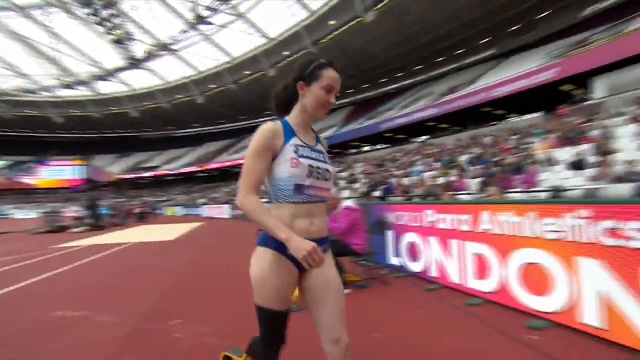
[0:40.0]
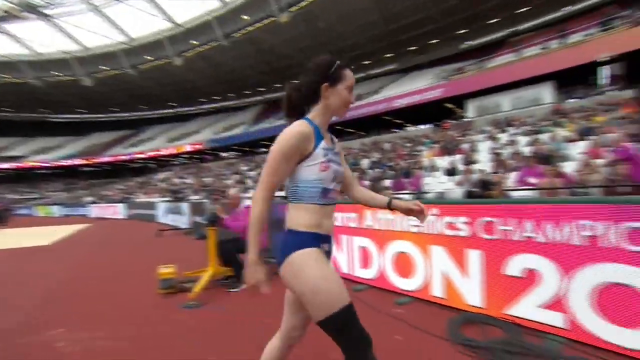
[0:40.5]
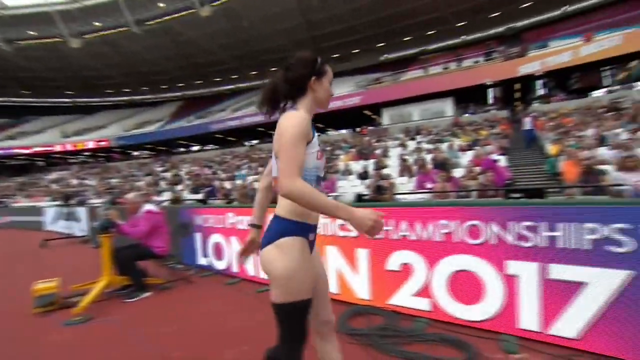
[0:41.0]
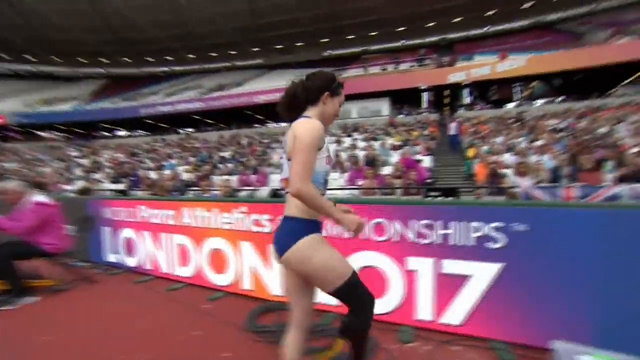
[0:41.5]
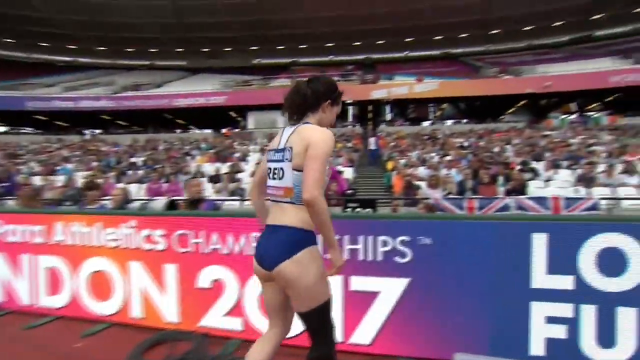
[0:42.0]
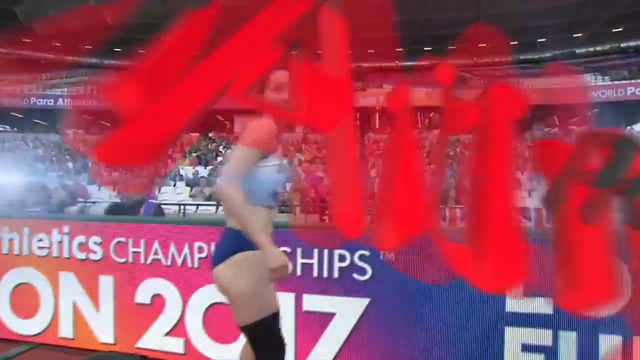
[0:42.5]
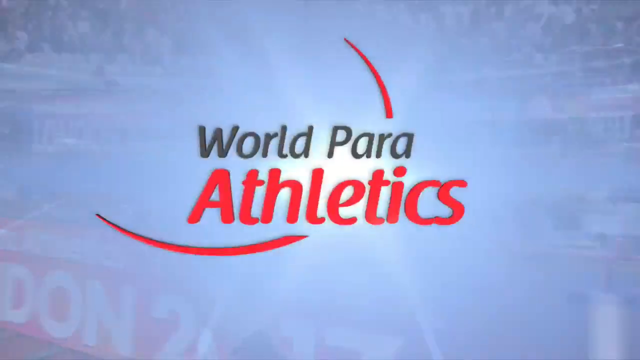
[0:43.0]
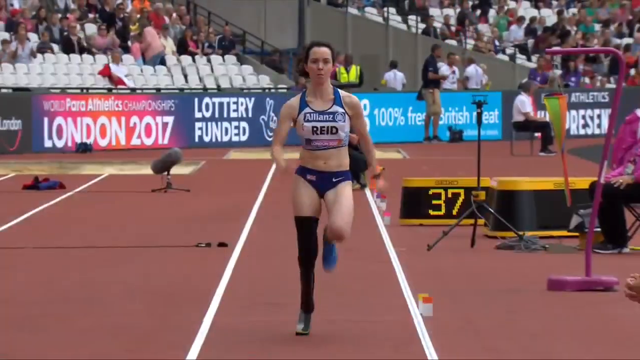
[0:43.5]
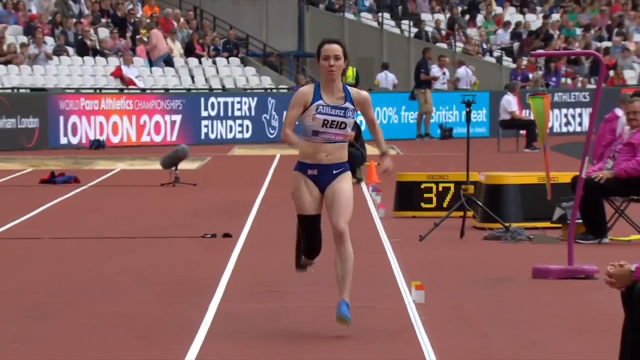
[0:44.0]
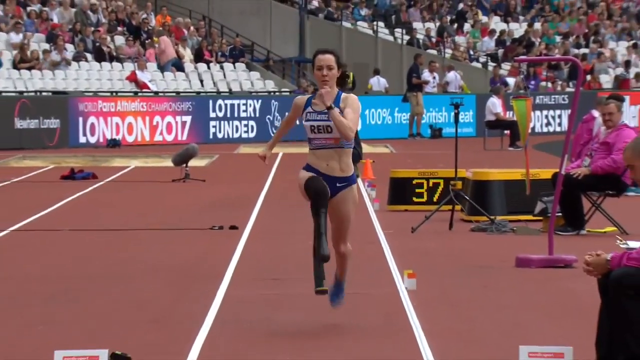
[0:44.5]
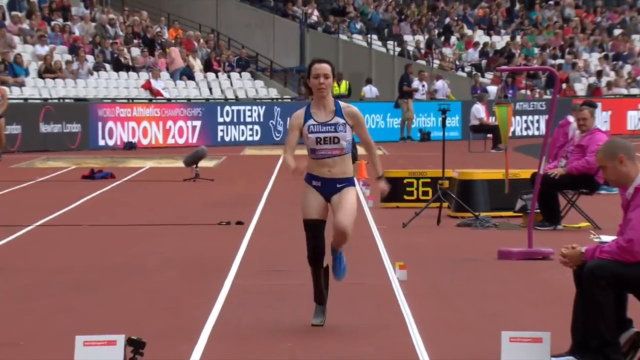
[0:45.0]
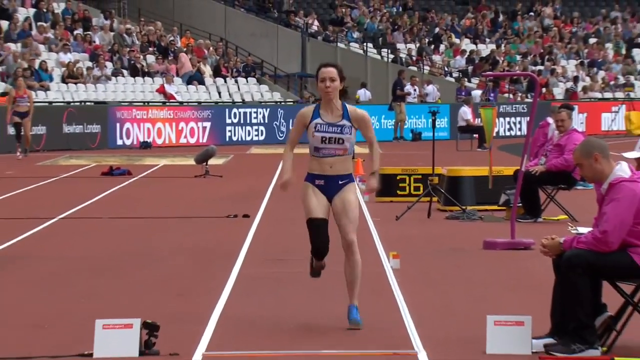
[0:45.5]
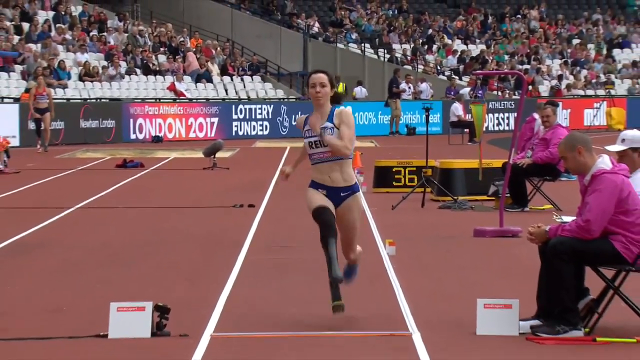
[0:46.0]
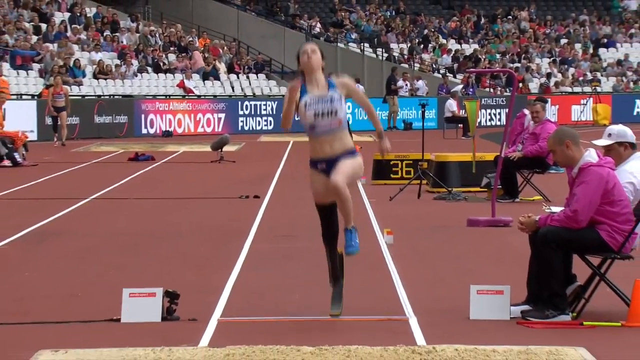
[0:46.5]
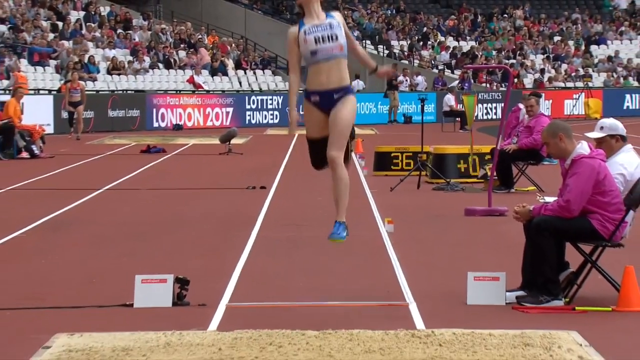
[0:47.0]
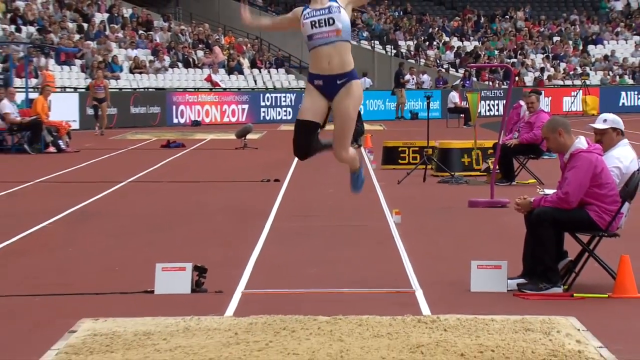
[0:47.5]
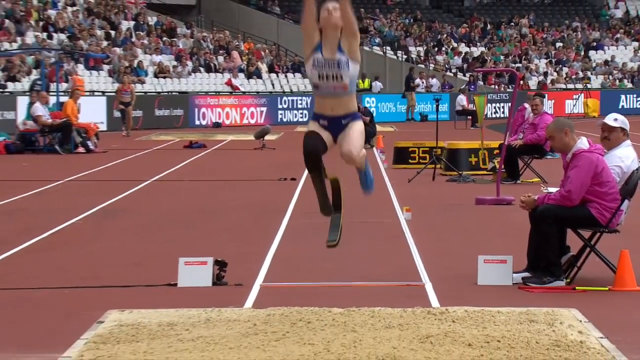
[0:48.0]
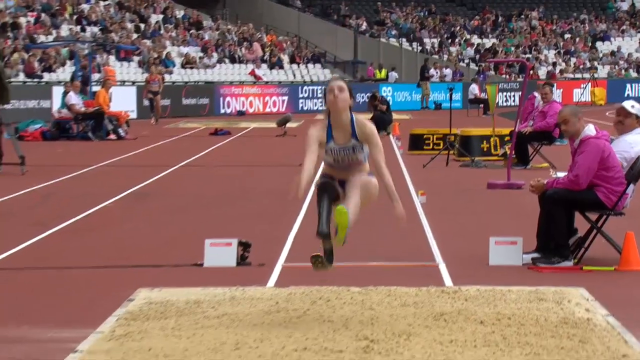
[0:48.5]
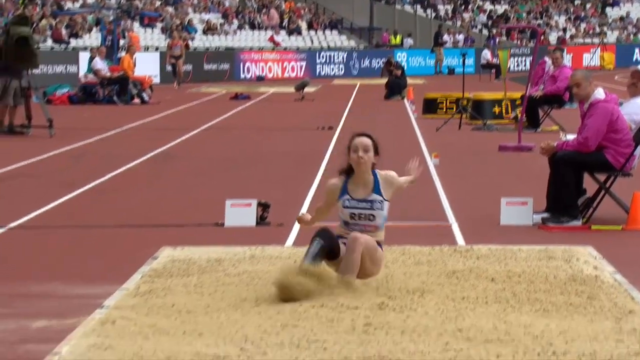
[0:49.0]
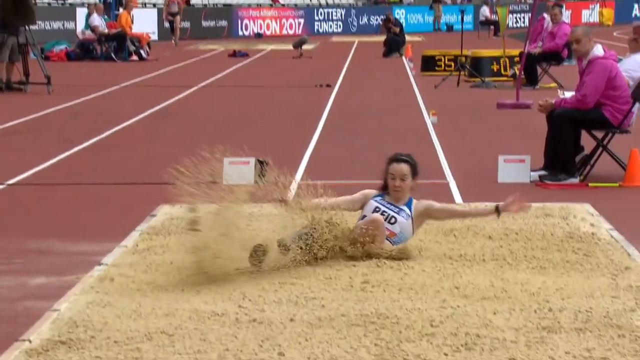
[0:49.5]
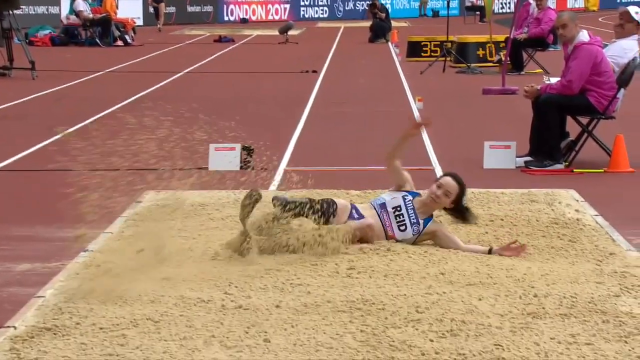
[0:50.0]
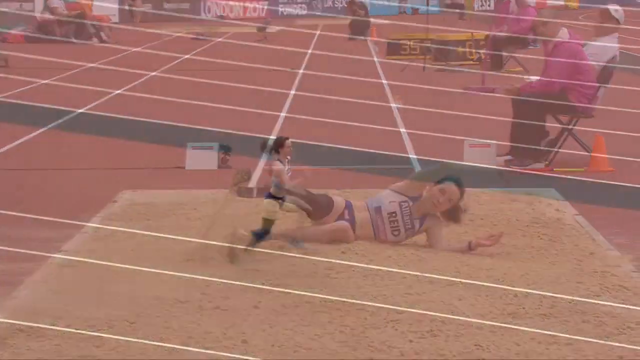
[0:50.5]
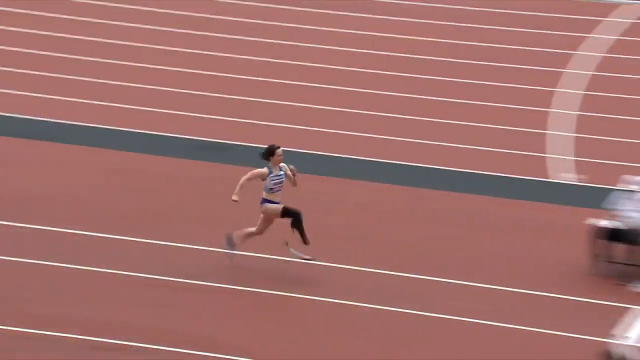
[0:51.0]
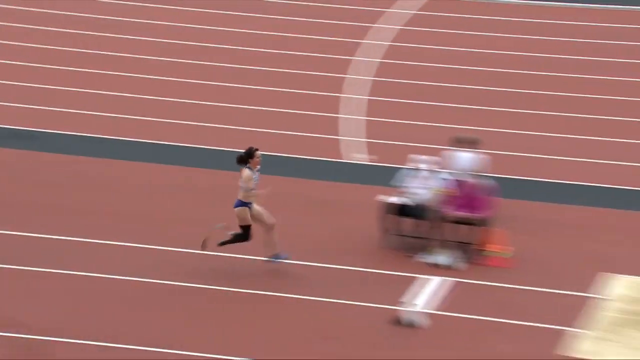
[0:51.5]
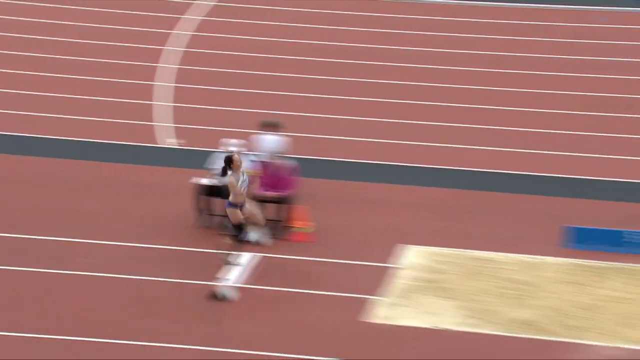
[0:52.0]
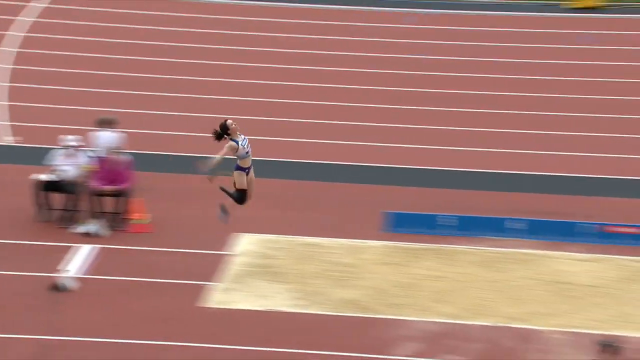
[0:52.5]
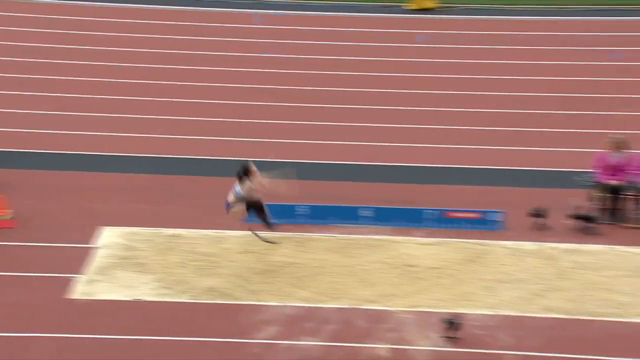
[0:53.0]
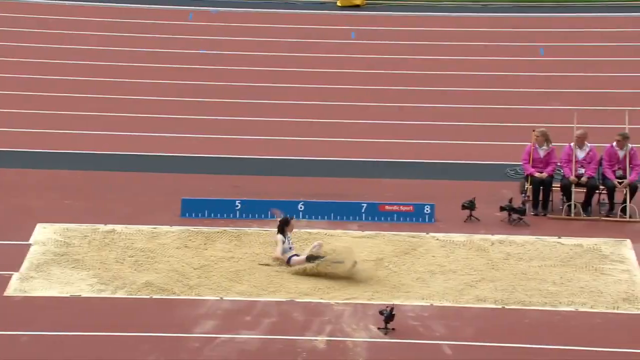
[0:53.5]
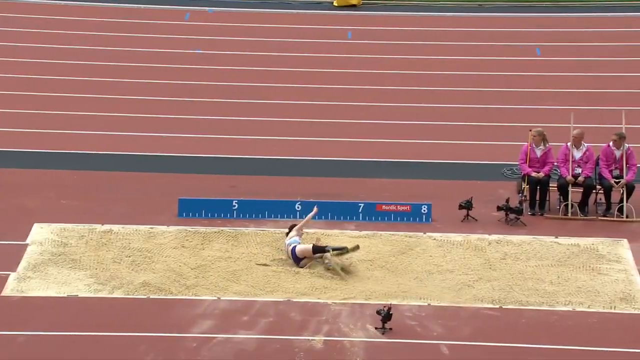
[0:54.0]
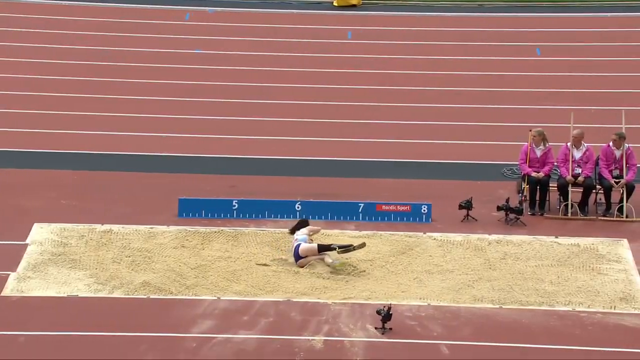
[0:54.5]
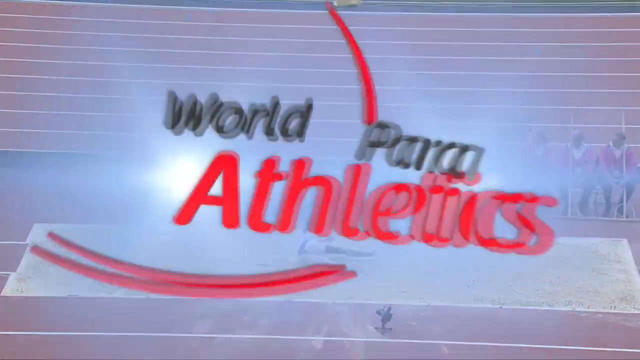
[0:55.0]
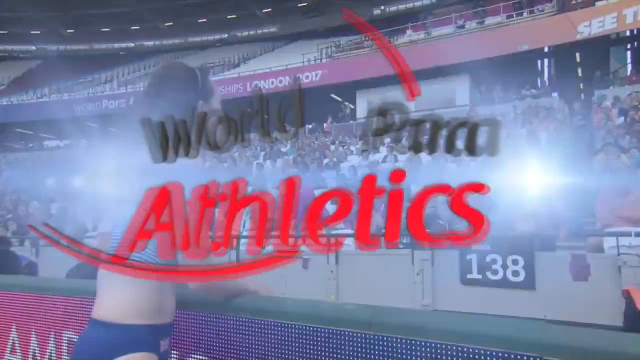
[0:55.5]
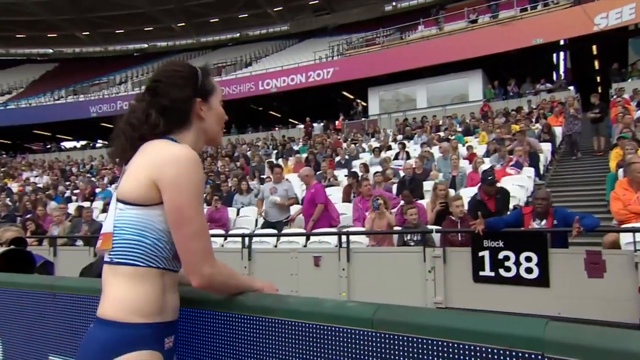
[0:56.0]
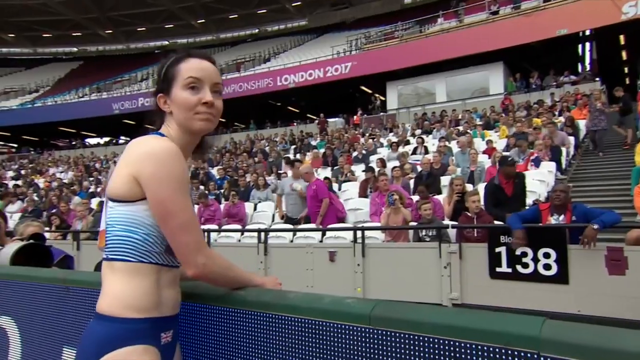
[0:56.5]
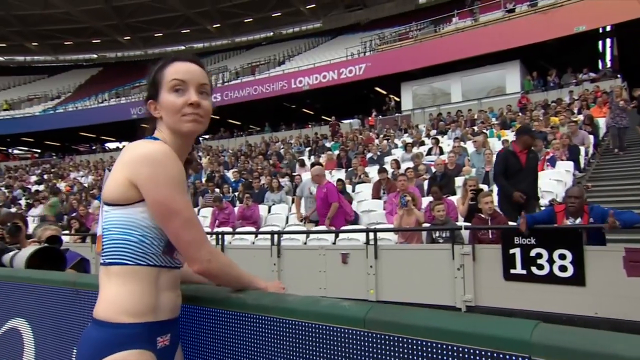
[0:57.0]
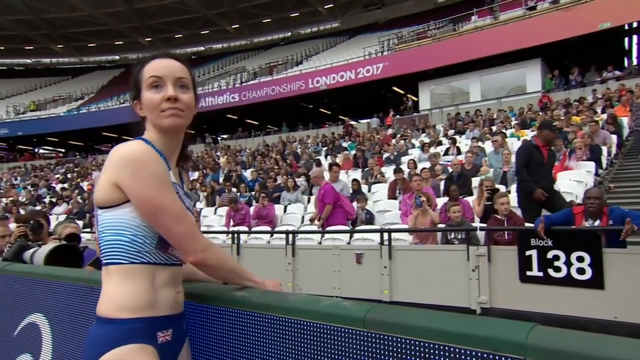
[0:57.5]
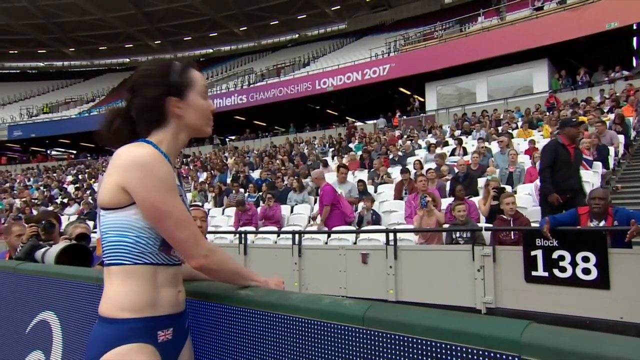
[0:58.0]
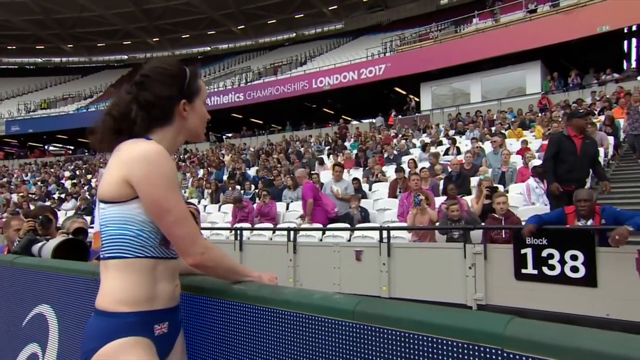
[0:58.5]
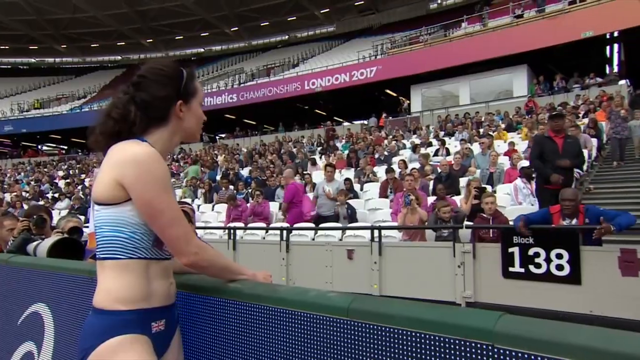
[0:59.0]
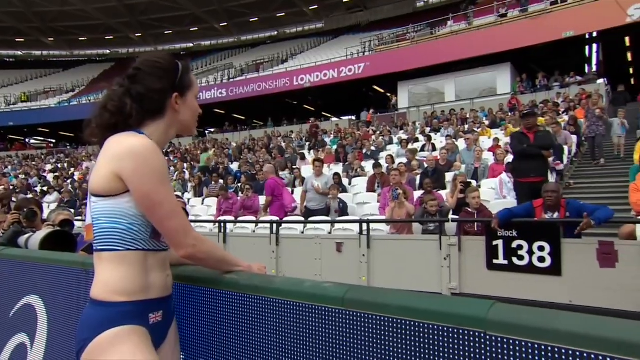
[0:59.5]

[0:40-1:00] A woman walks off the side of the track and up to the barrier. A logo reading "World Para-Athletics" appears, followed by an instant replay of her running up the track toward the camera, arms flailing and legs moving. At the white line she lifts her entire body into the air, throwing her arms up, and lands with both feet in the sand before falling over to the side. A different replay follows from a side view looking down as she runs down the track and does her long jump. A black strap holds her artificial leg onto her upper thigh area. The event is the Para-Athletic Games in London.